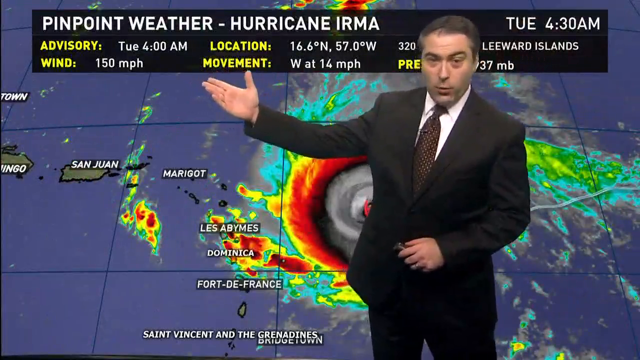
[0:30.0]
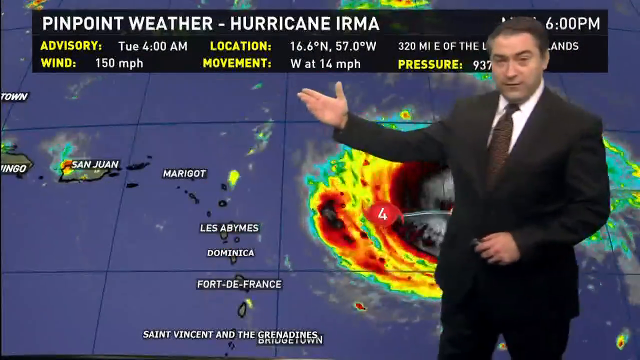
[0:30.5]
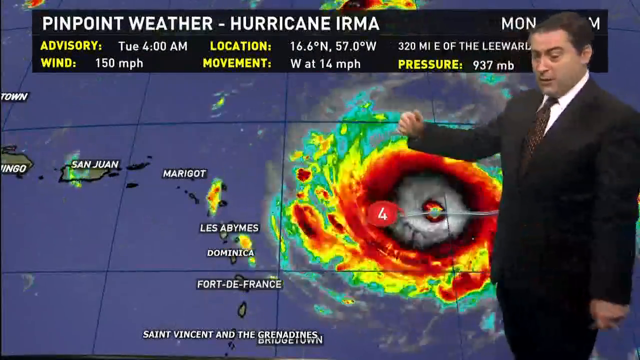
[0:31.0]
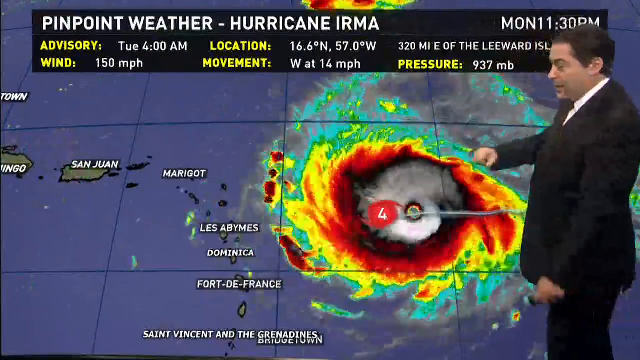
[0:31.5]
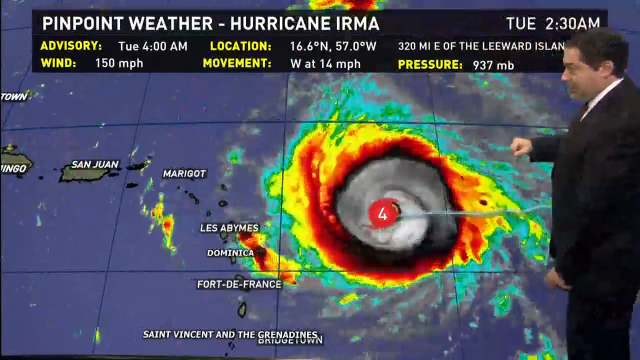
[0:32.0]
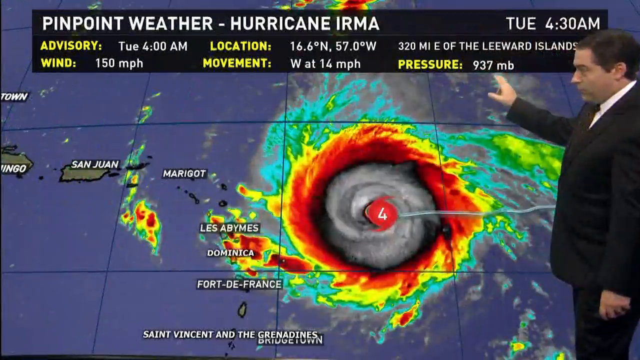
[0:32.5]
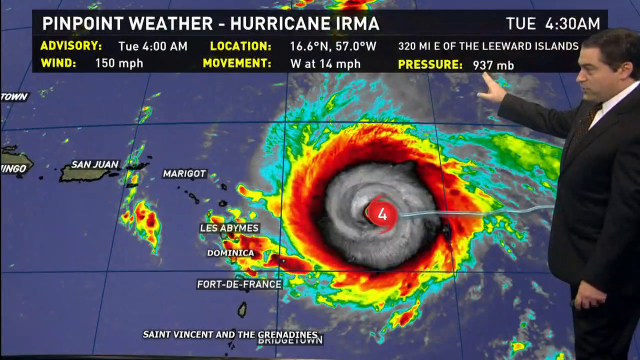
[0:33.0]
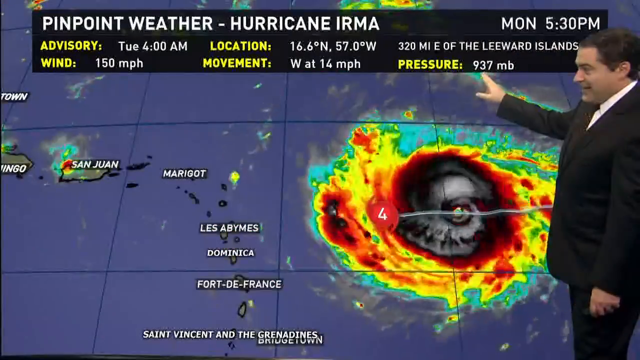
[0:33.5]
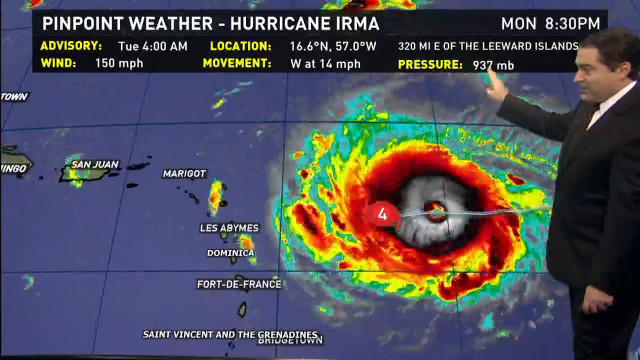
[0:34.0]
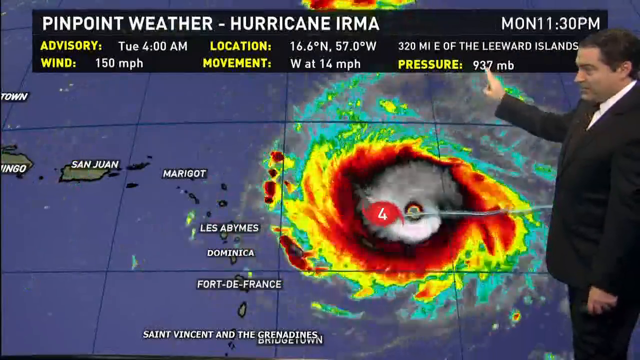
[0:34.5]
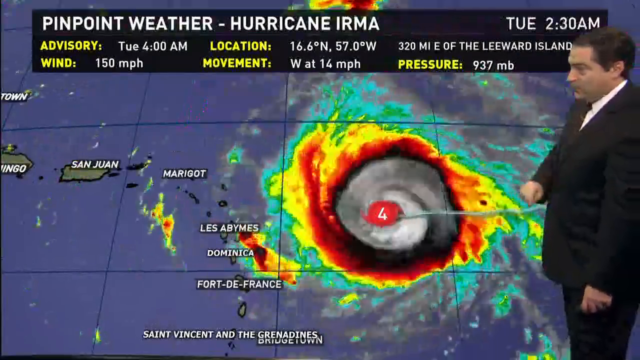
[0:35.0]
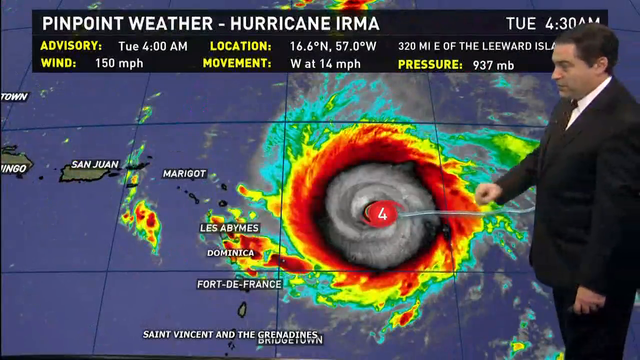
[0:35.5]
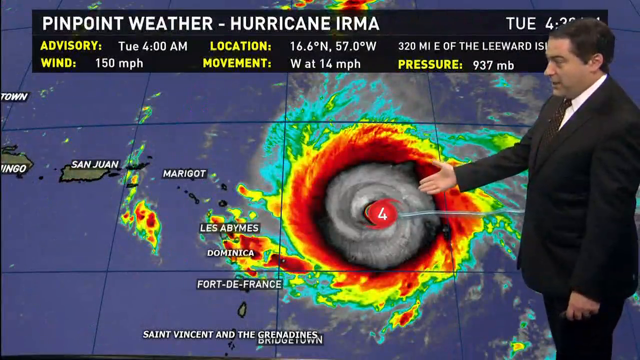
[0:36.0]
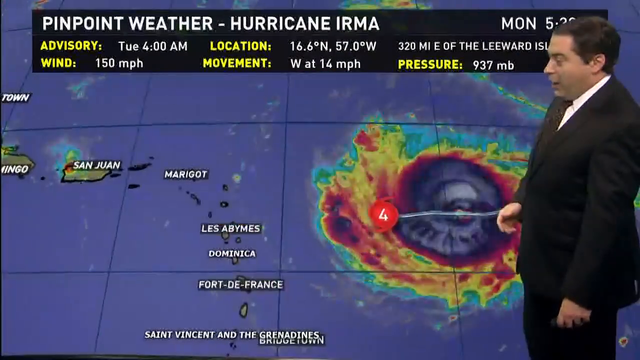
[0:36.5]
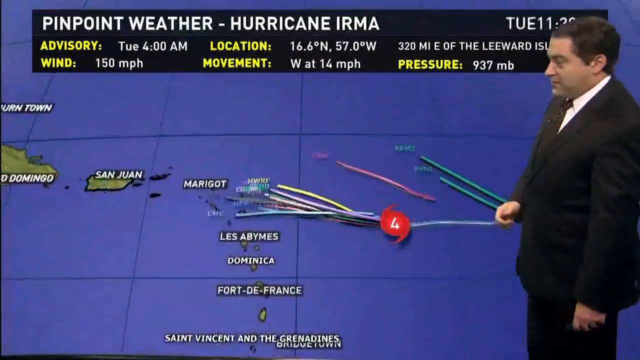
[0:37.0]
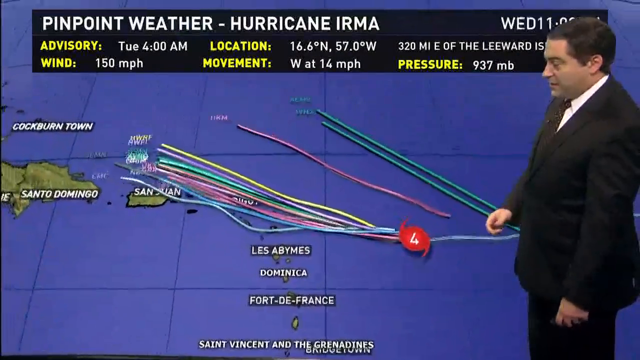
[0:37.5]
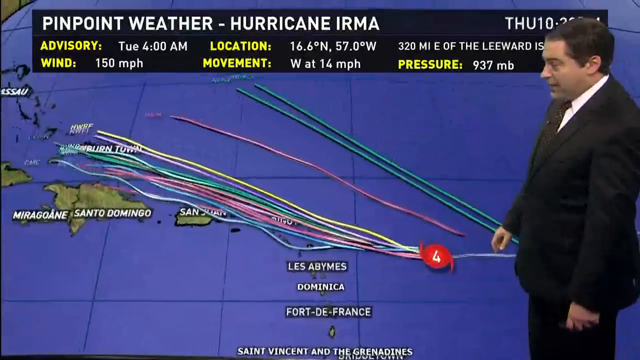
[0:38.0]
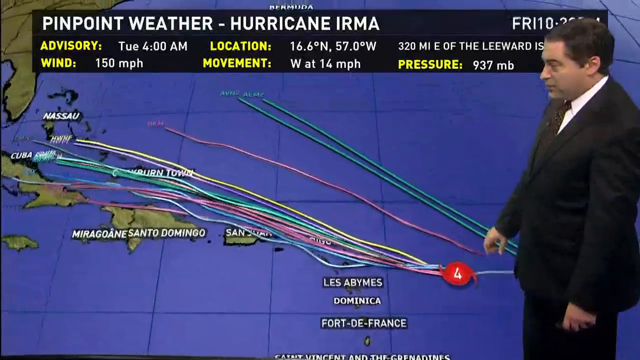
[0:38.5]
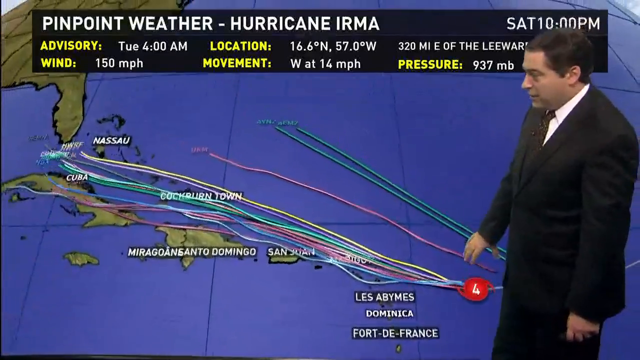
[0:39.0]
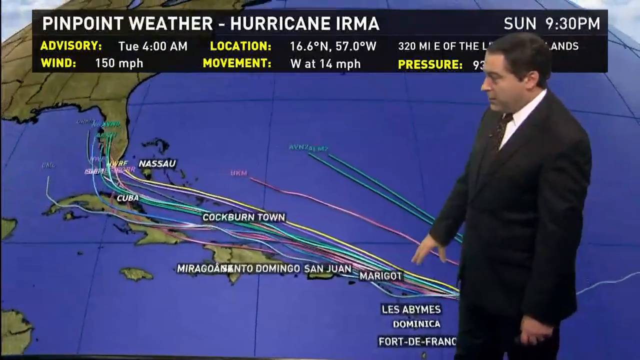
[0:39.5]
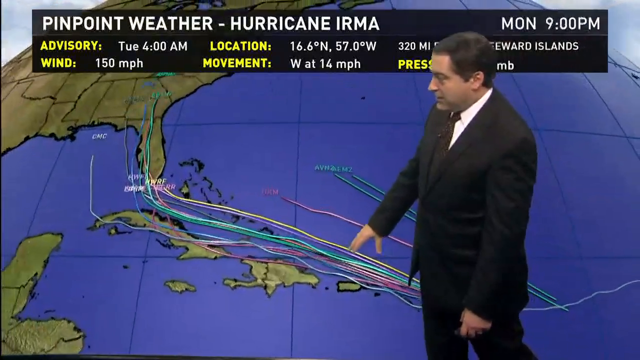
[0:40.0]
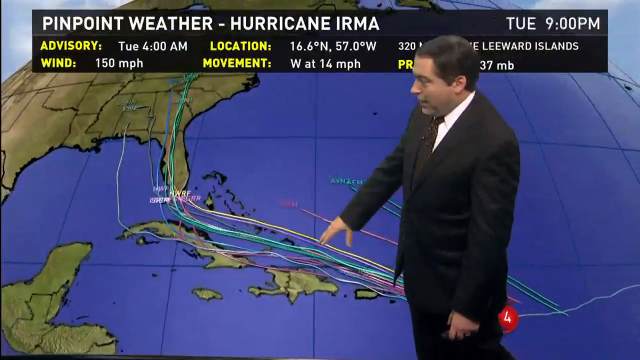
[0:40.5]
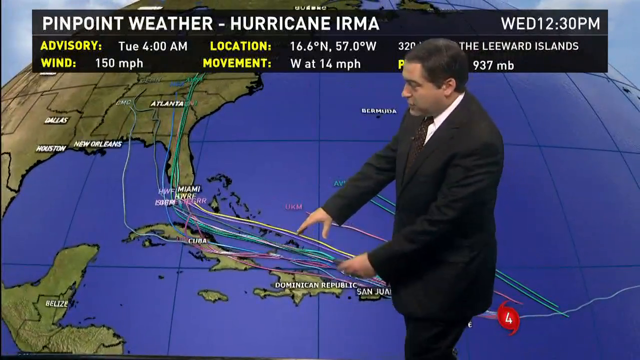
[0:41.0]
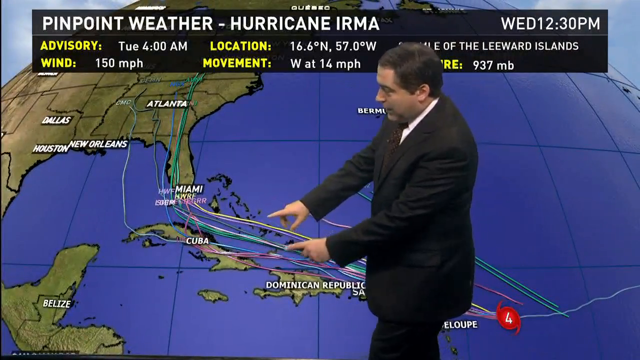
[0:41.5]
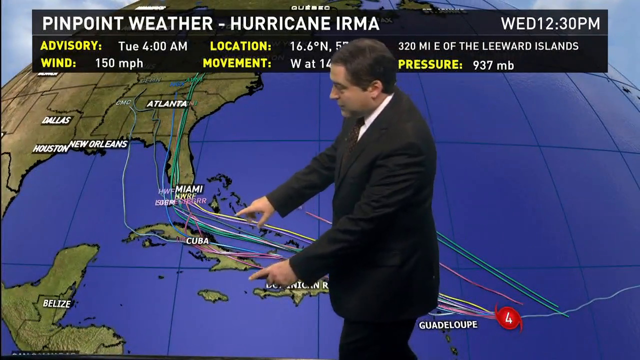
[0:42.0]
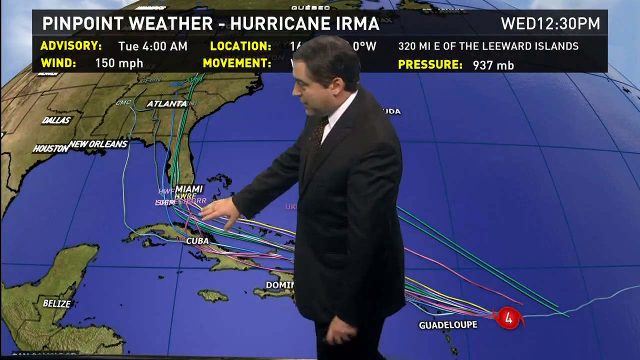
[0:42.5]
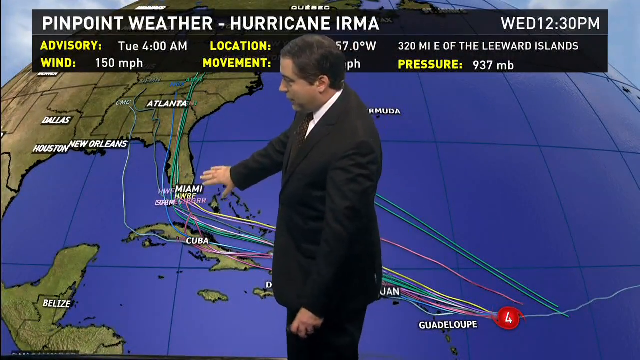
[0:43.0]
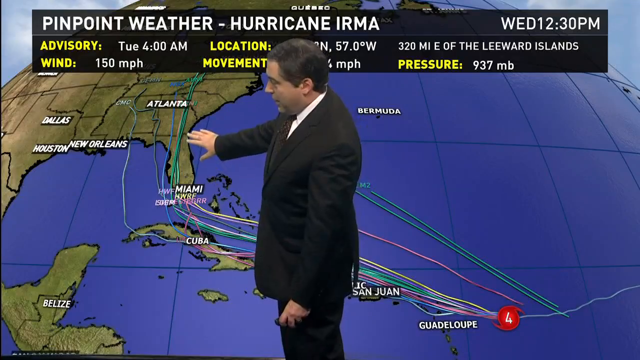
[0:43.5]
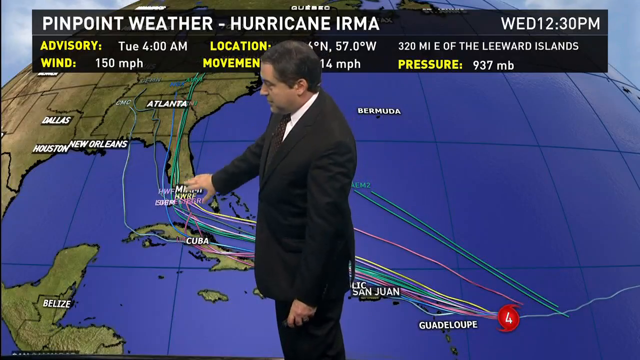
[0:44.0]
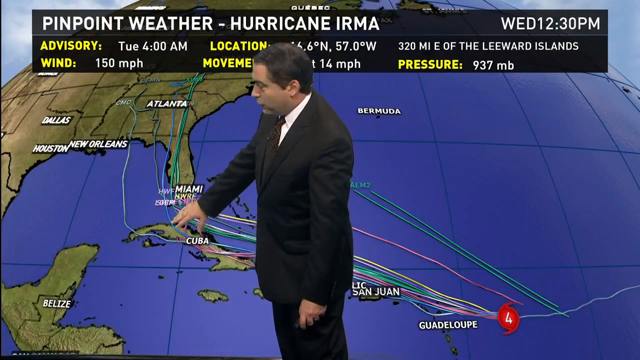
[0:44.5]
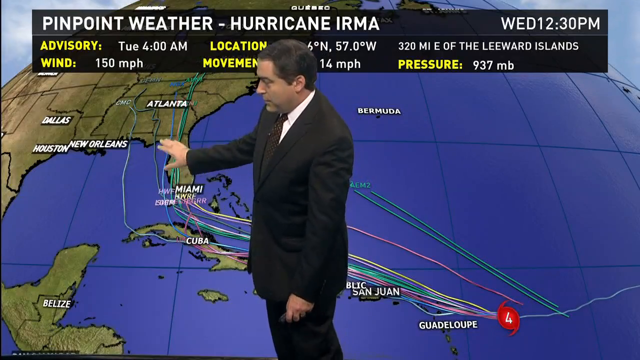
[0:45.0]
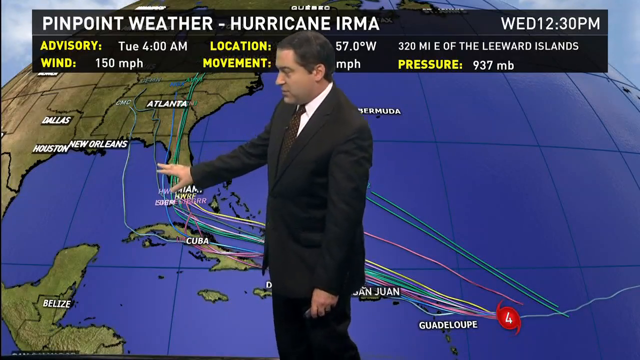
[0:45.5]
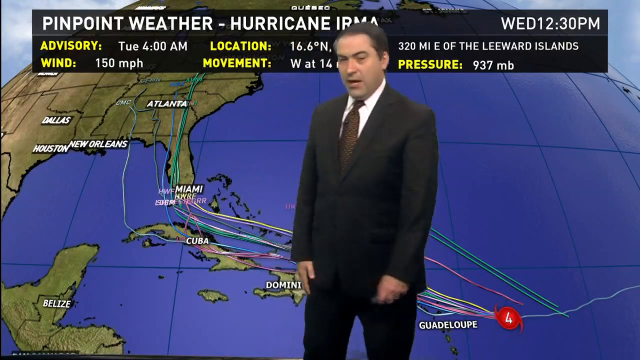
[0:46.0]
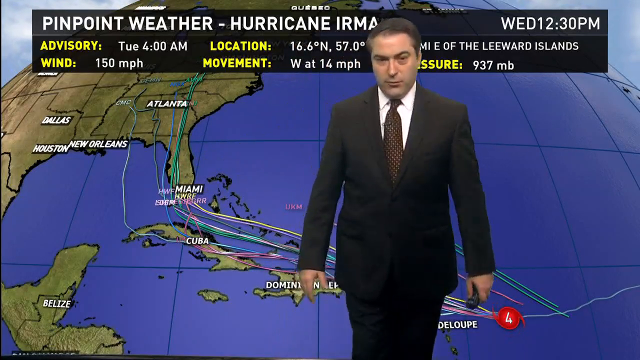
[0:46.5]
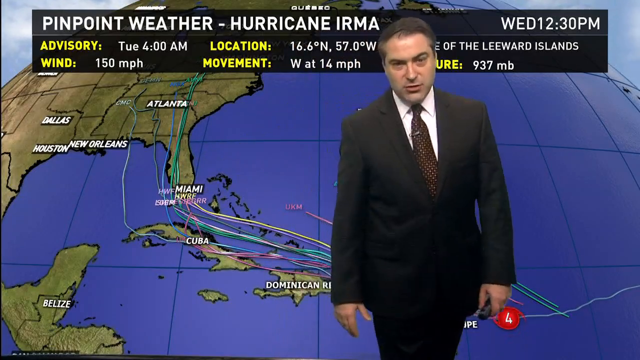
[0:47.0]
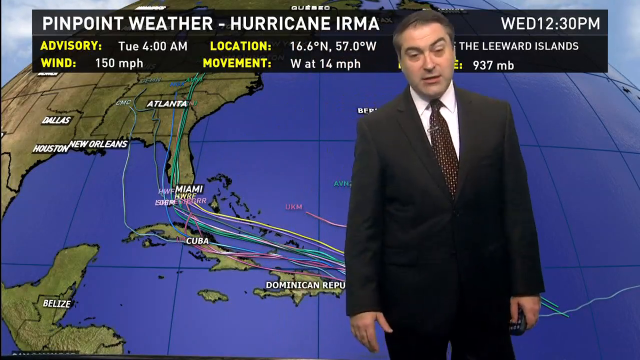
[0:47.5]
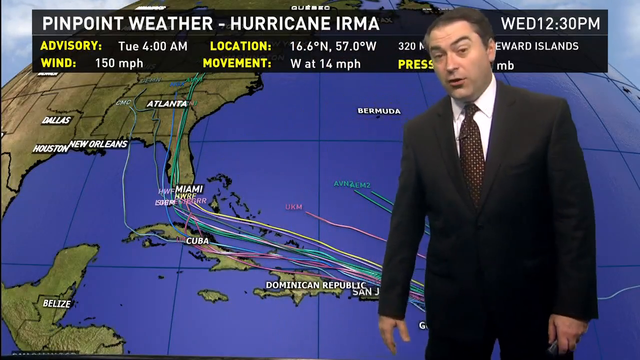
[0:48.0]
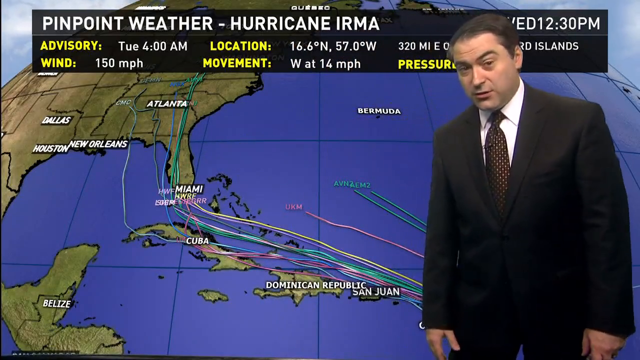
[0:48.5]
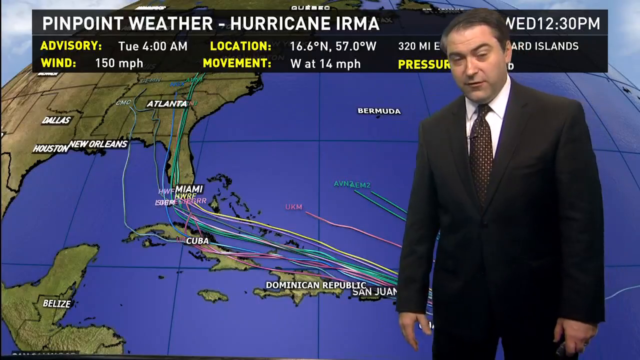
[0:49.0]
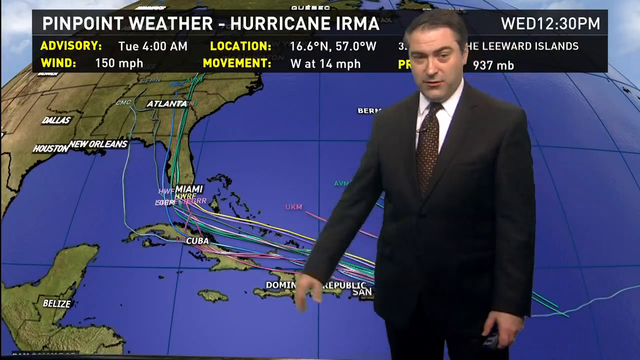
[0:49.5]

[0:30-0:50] The weatherman wears a black suit, burgundy tie and white shirt, and has short dark hair and thick eyebrows. He holds the weather clicker in his left hand and uses his right hand to point to a black information box on the screen behind him, which reads "pinpoint weather, Hurricane Irma, Tuesday at 4.30 a.m." and gives the advisory, the wind, the location, the movement and the pressure. He backs away a little, still pointing up at the pressure of 937 MBs. The screen behind him then changes from the circular hurricane visual to a spaghetti map showing the different directions the hurricane could possibly go over the Caribbean, and which spaghetti lines might or might not hit the United States. He walks back and forth to his left and right, gesturing at the map with his right hand. He takes some big steps with his right arm following the tracking, sort of puts his hand over Miami, and then points off towards the left side of the screen.